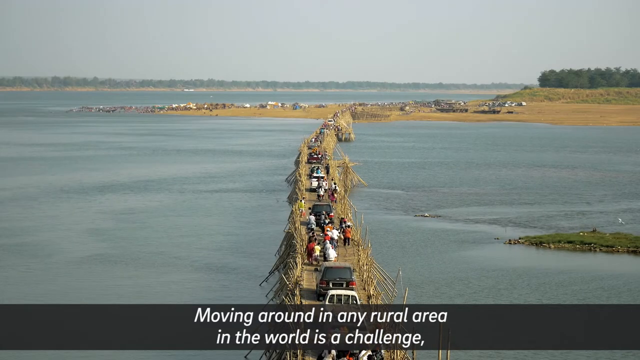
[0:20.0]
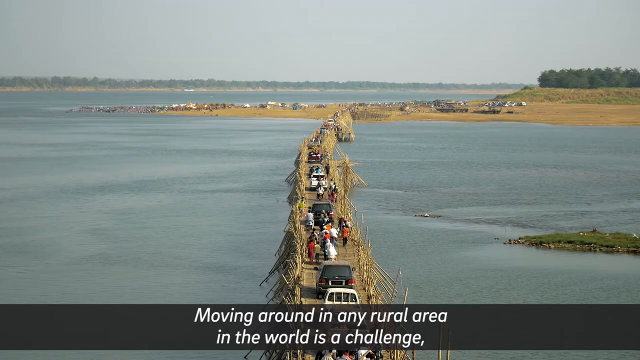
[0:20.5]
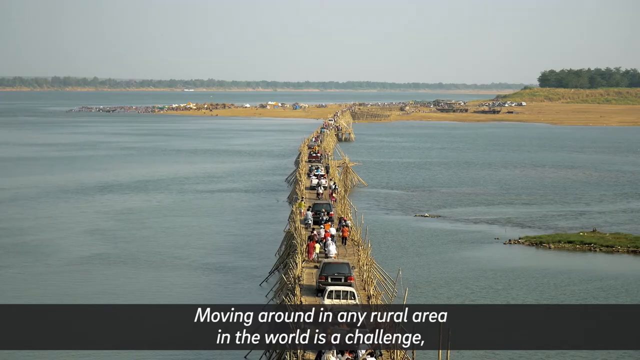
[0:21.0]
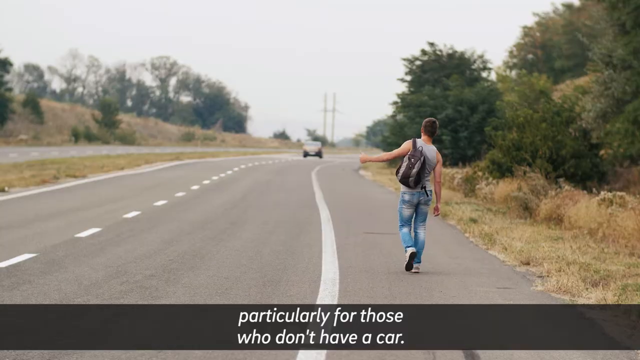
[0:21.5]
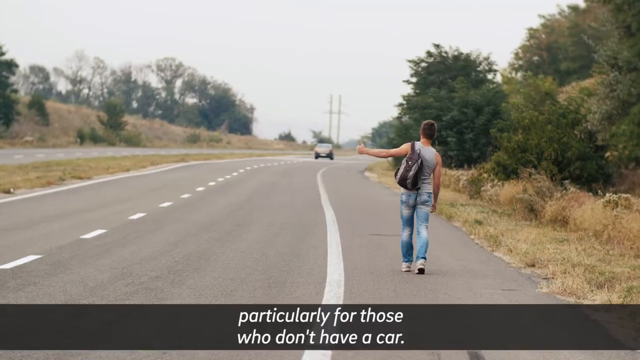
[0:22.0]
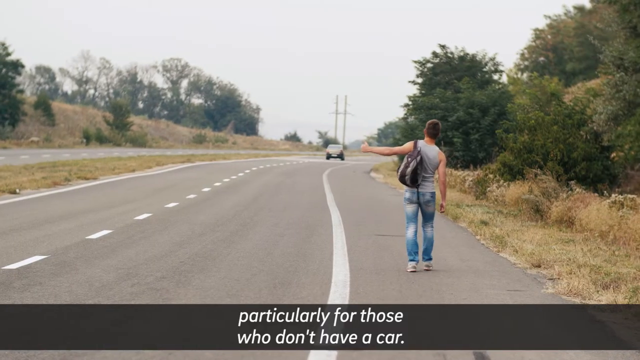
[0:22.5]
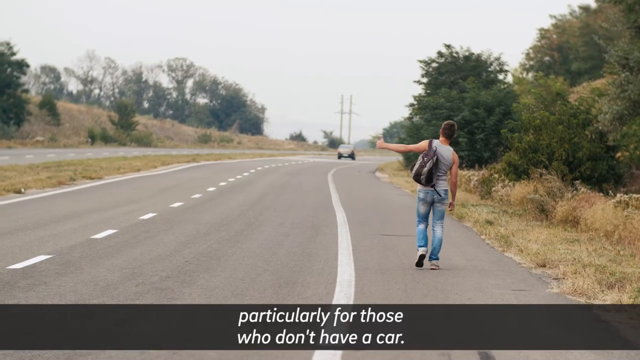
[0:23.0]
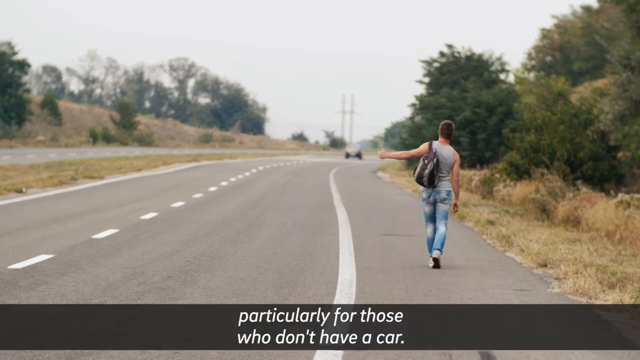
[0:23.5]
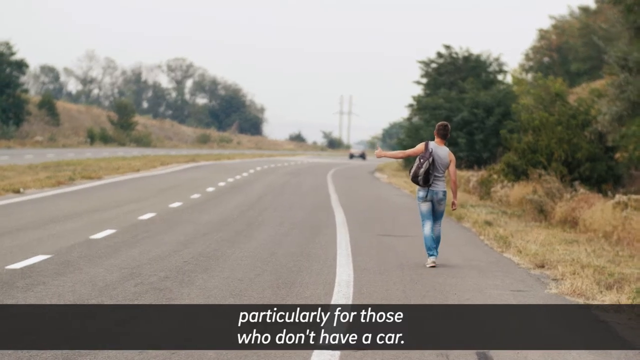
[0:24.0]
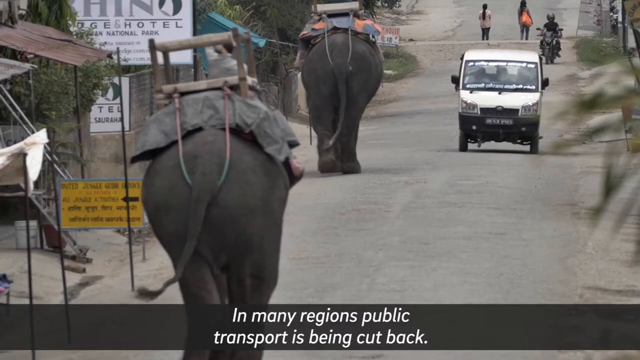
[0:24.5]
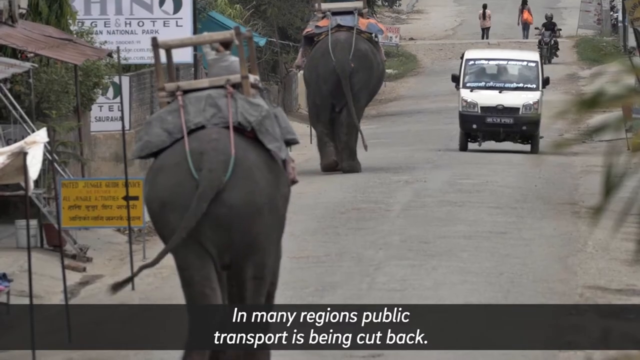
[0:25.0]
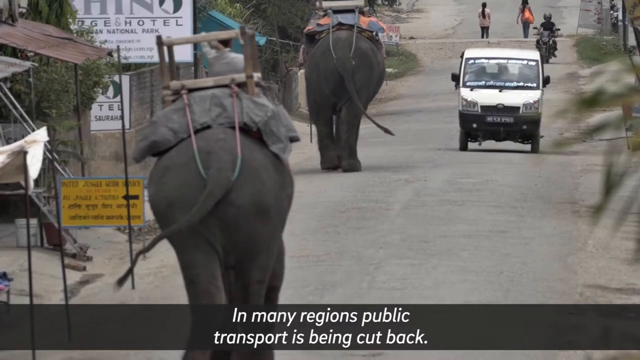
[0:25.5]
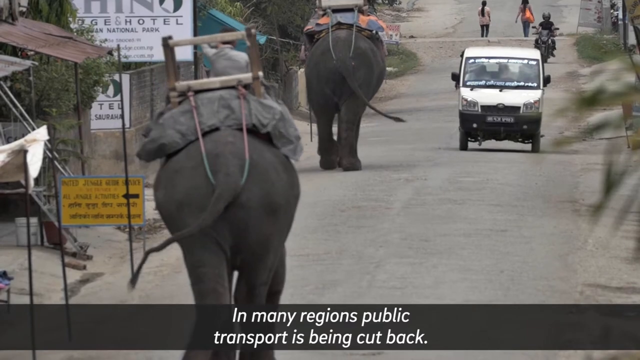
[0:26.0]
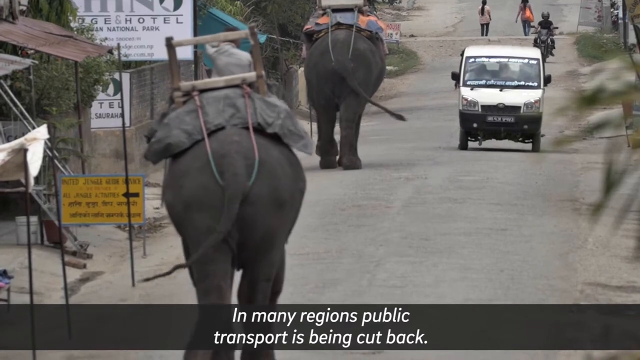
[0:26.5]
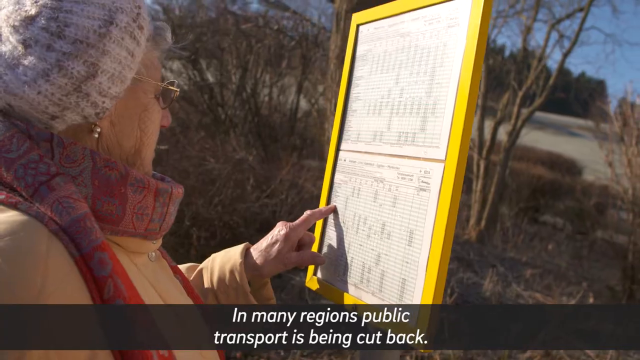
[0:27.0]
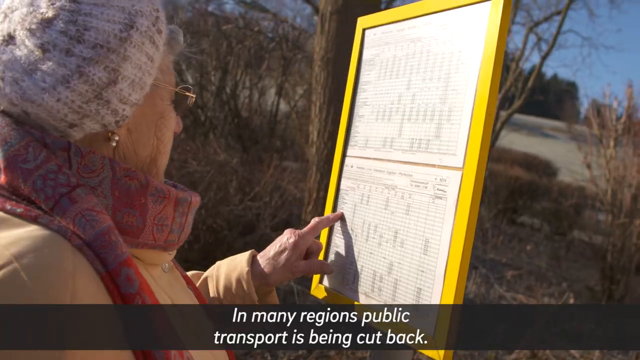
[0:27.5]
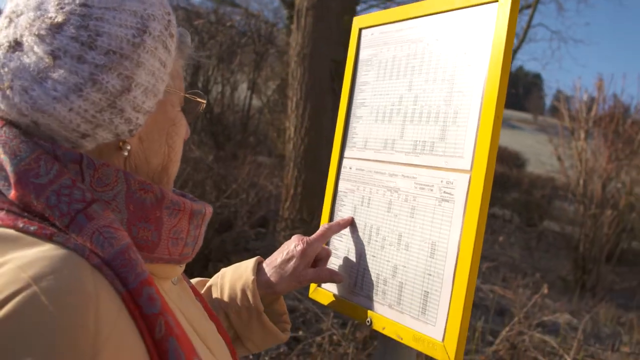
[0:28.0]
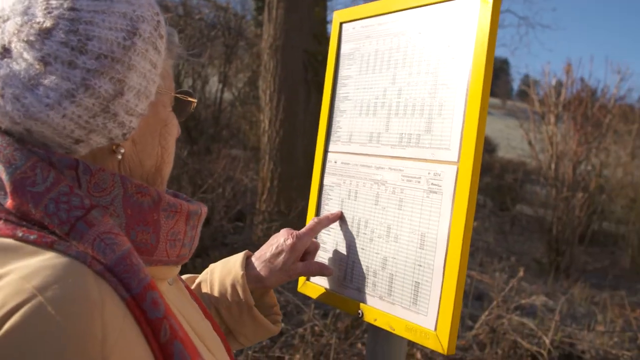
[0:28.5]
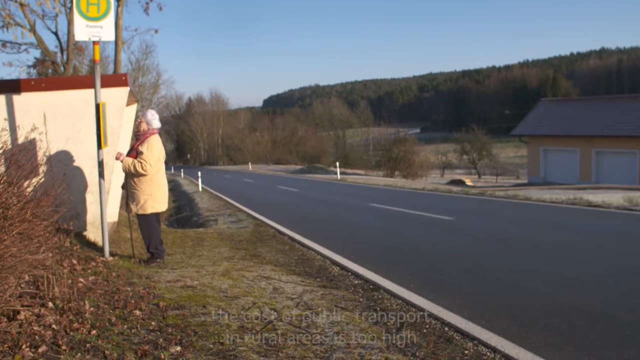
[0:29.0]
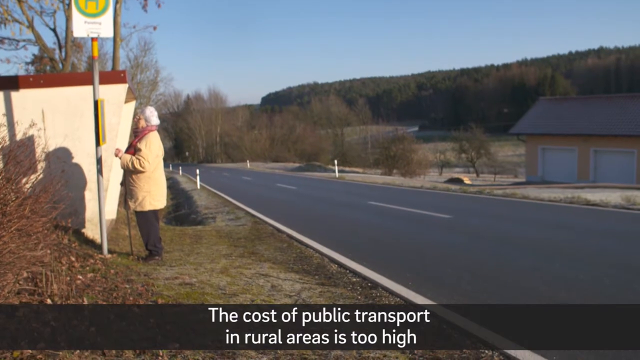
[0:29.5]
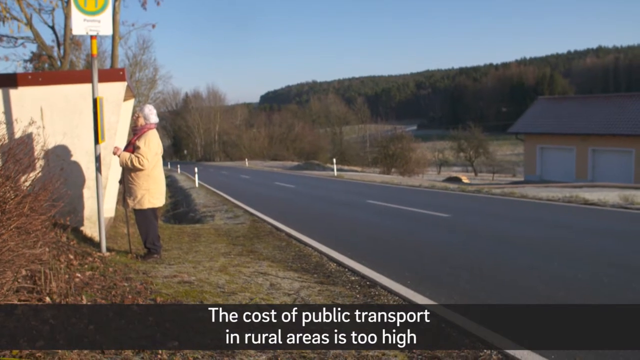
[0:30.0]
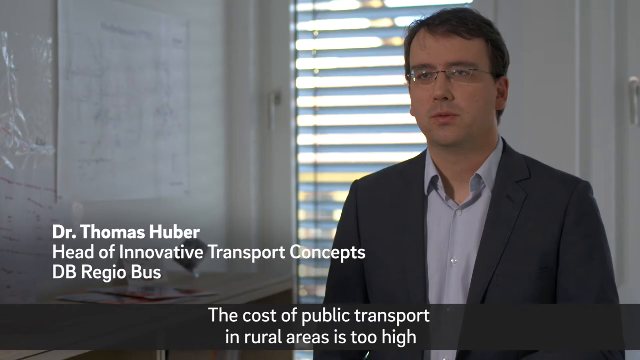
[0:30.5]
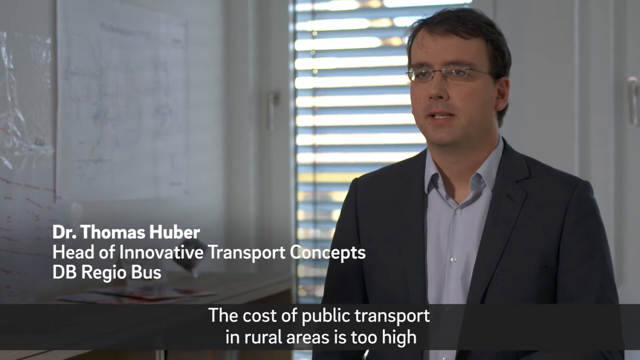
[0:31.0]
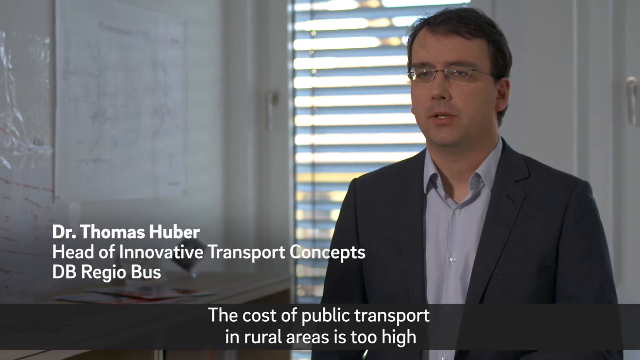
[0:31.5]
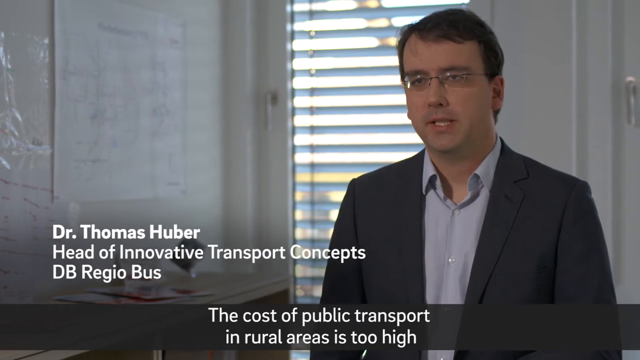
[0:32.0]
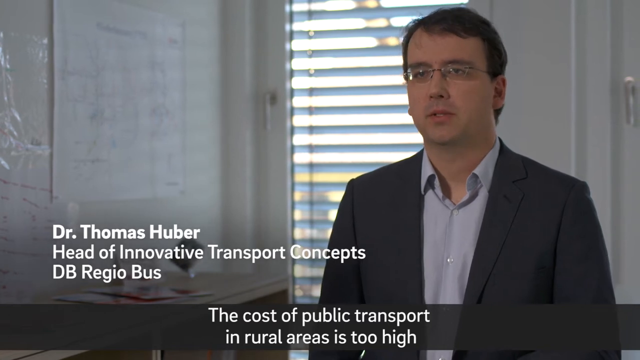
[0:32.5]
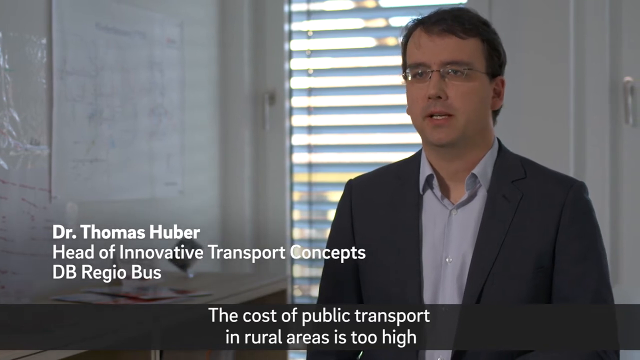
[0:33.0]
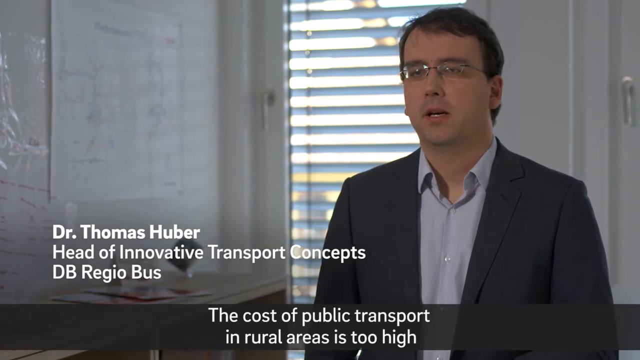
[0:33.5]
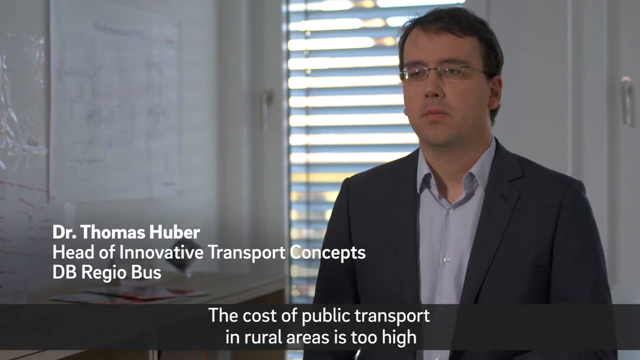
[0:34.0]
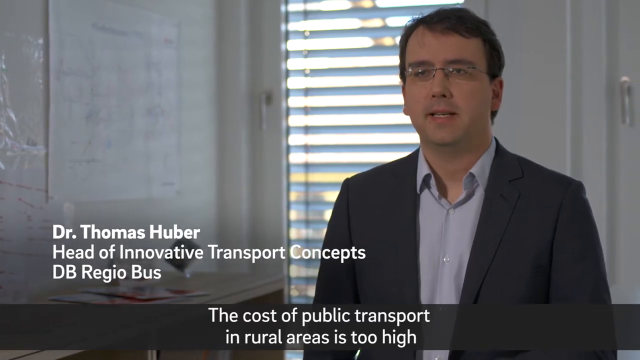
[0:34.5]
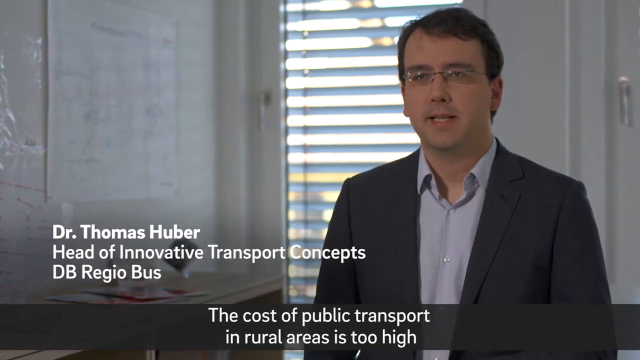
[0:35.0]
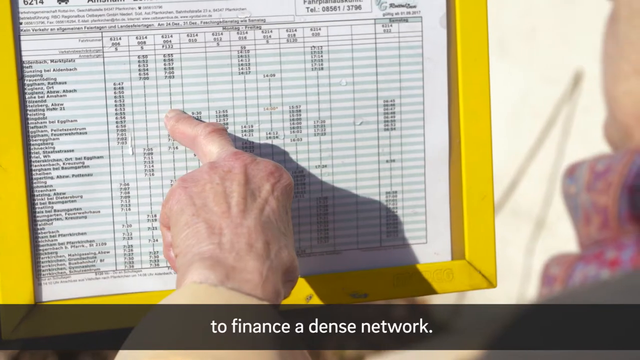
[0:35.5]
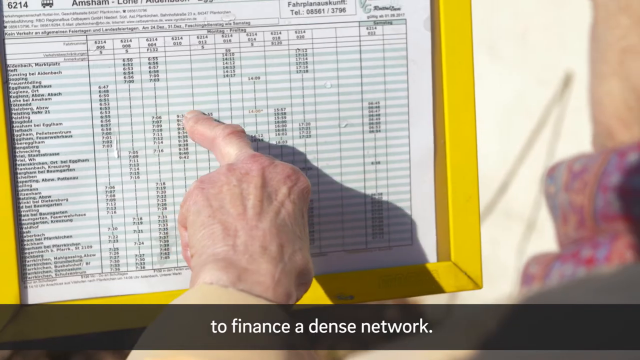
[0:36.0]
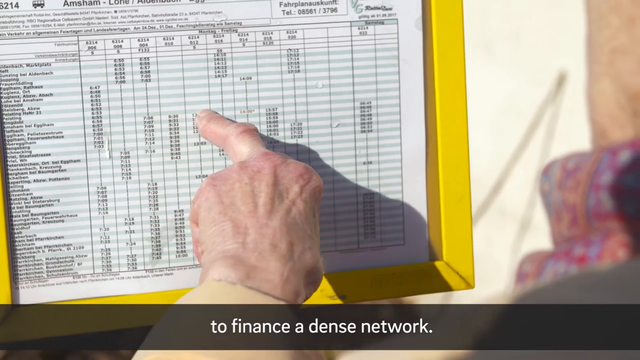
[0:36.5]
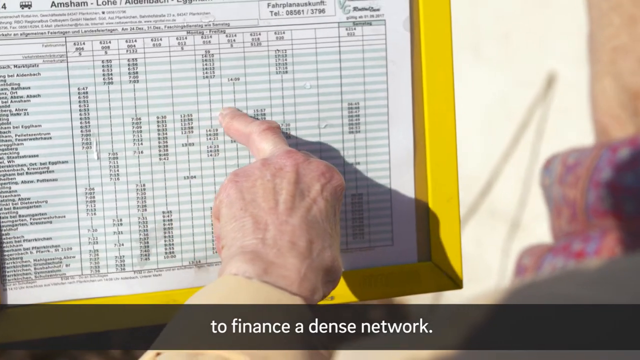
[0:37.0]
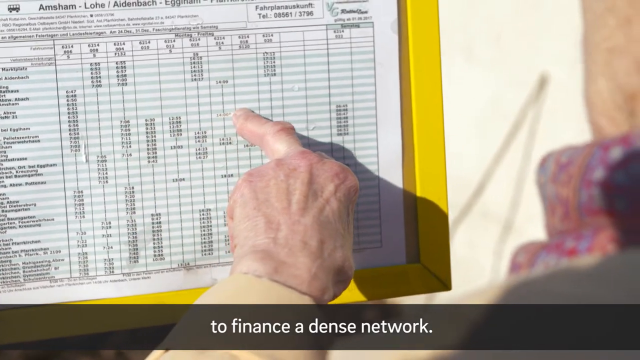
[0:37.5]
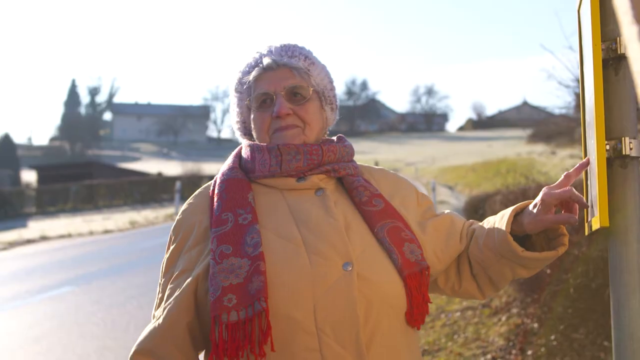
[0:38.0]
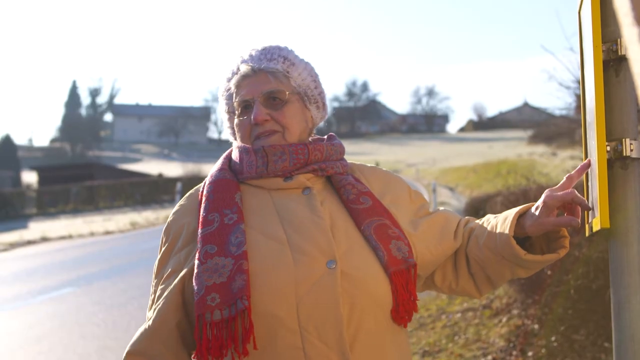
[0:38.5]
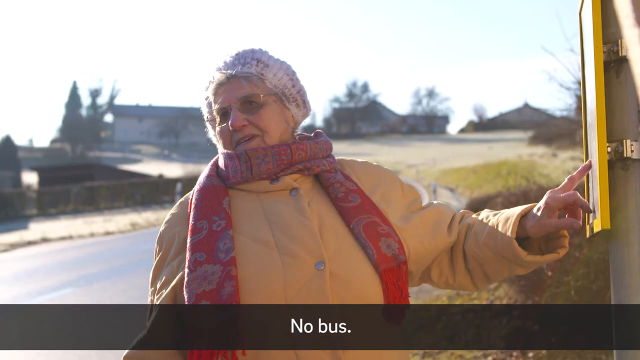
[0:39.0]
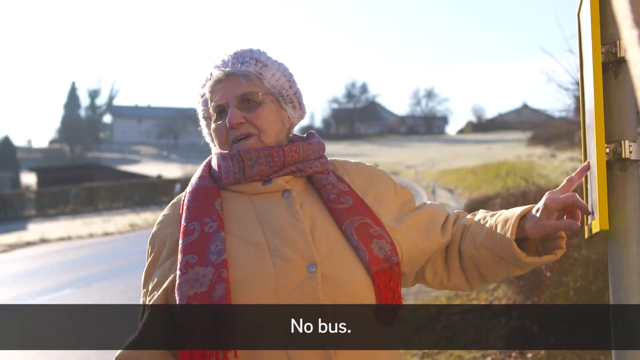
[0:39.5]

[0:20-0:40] A road appears, seemingly a bridge of some sort. White text on a black background at the bottom reads "moving around in any rural area." Text continues "particularly for those who don't have a car" as someone is seen hitchhiking, followed by "in many regions public transport is being cut back" and "the cost of public transport in rural areas is high." A man on the right side of the screen is talking; he wears glasses, a dark gray or black suit and a light button-down collar shirt. On the left side of the screen, white text reads "Dr. Thomas Huber," with "head of innovative transport concepts" beneath it and "DB Regio Bus" below that. He faces the camera and nods his head slightly. Someone, apparently at a bus stop, looks at a bus schedule with the pointer finger of her left hand, and text reads "no bus."